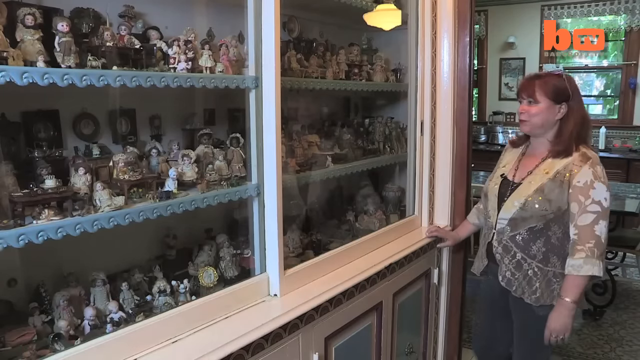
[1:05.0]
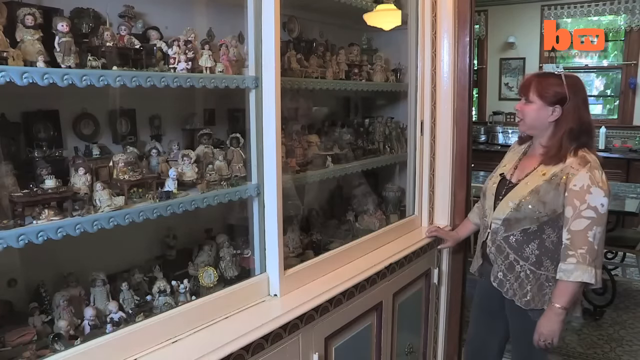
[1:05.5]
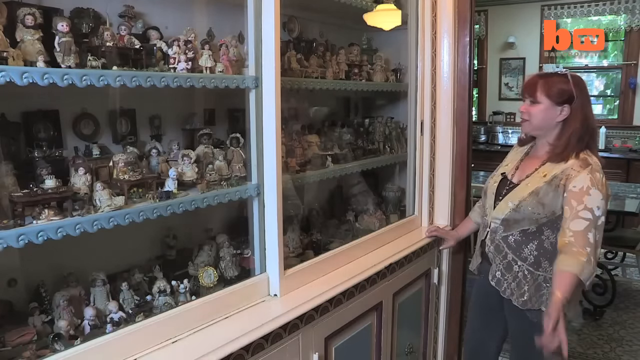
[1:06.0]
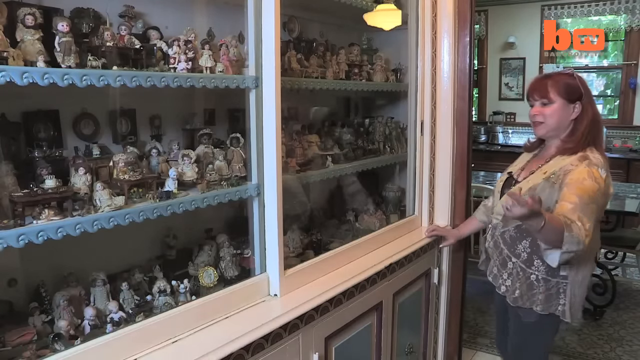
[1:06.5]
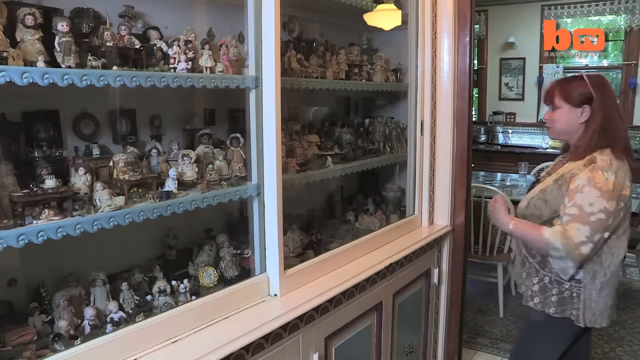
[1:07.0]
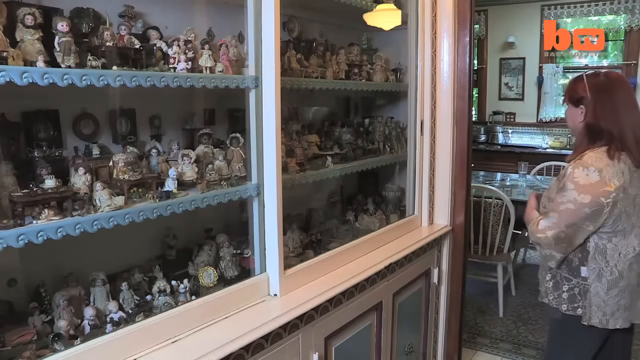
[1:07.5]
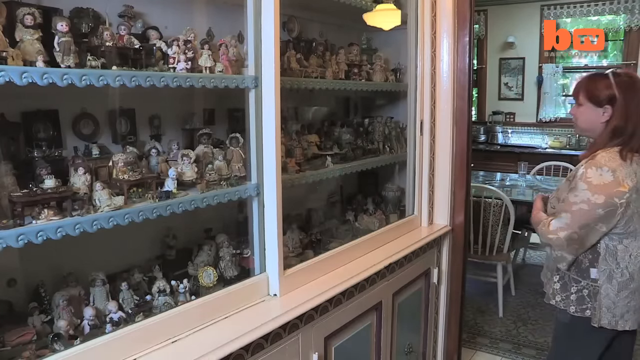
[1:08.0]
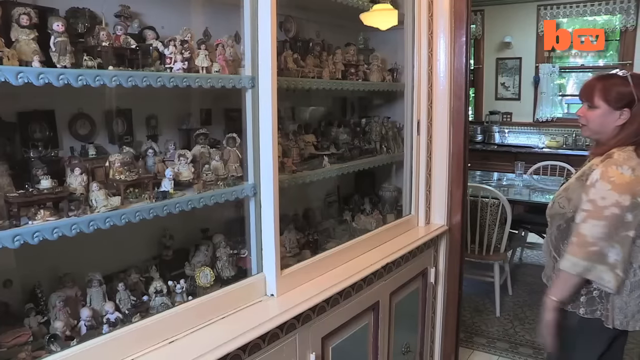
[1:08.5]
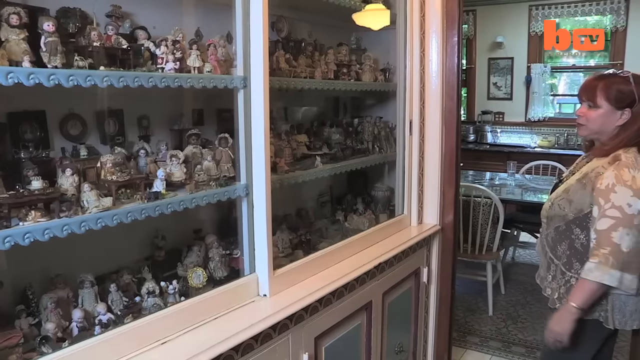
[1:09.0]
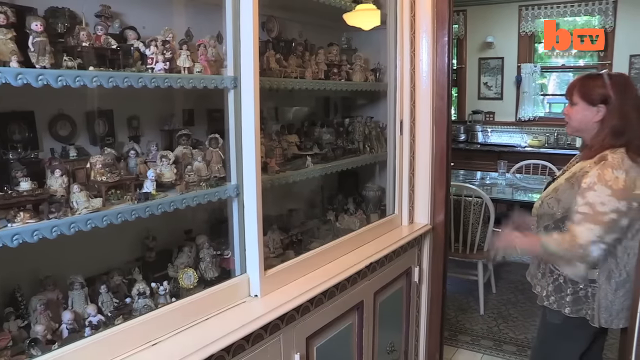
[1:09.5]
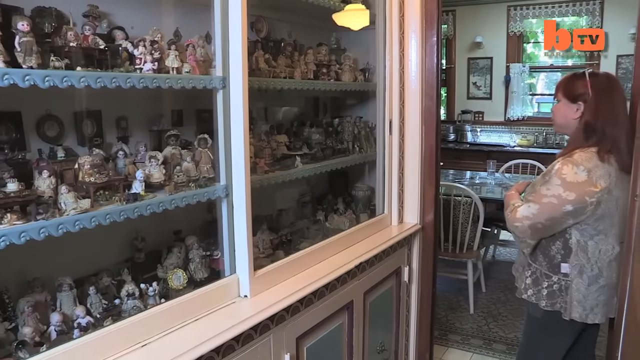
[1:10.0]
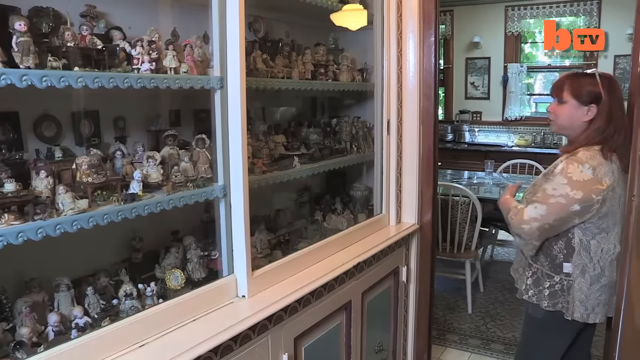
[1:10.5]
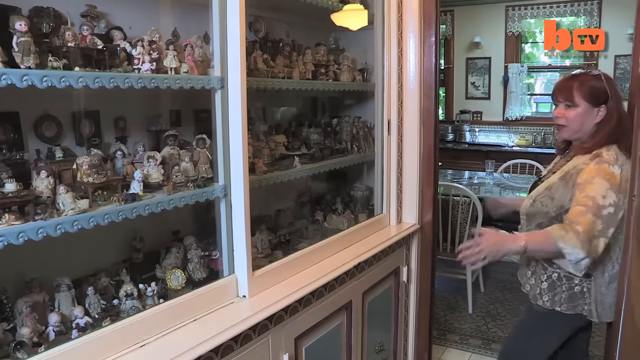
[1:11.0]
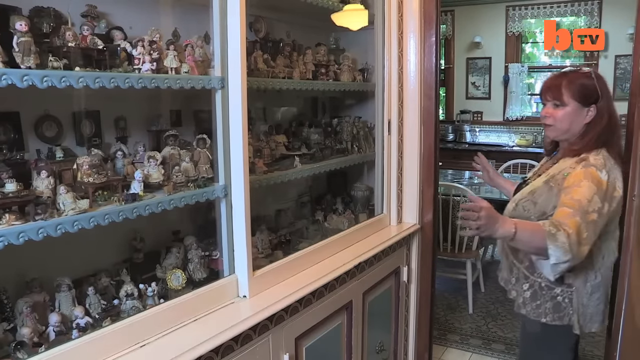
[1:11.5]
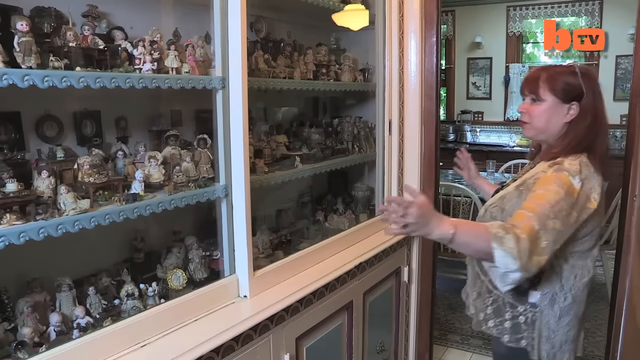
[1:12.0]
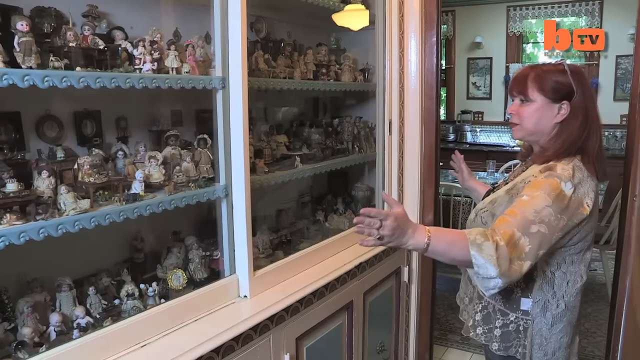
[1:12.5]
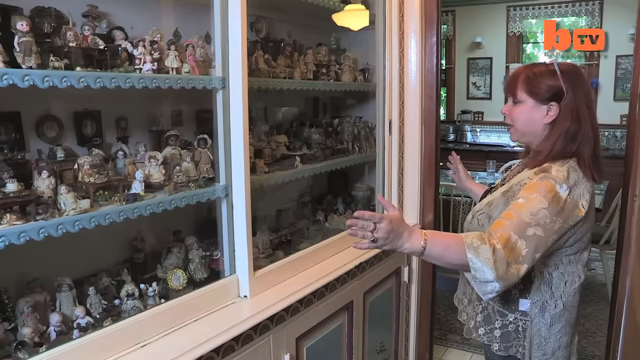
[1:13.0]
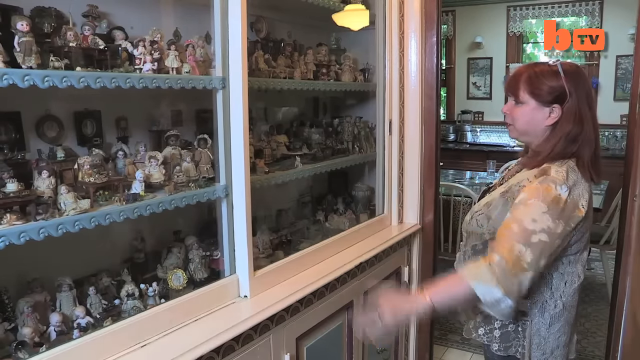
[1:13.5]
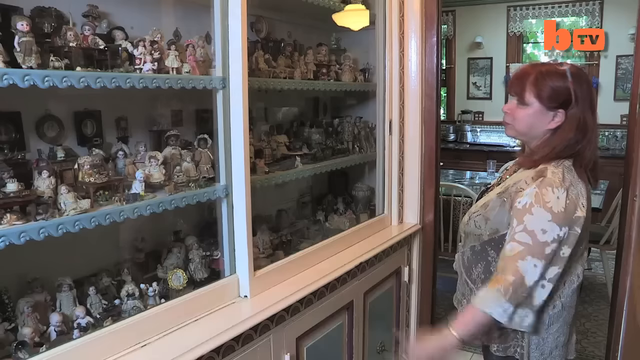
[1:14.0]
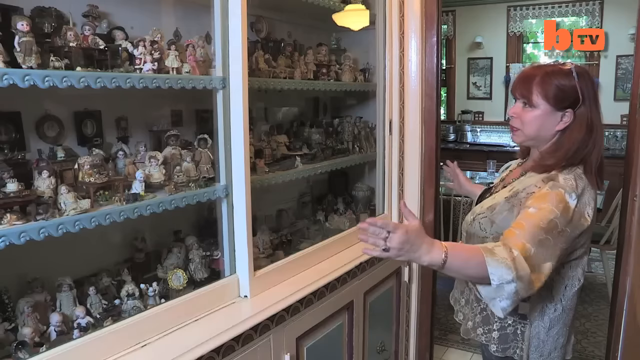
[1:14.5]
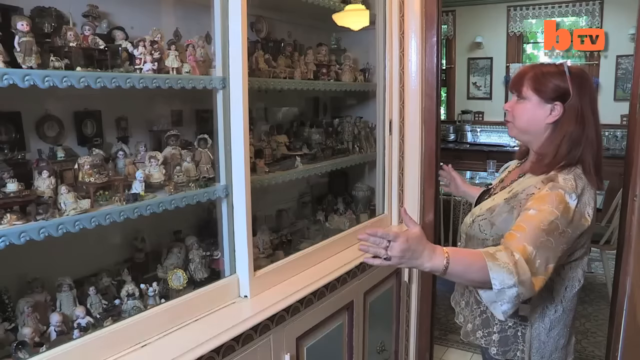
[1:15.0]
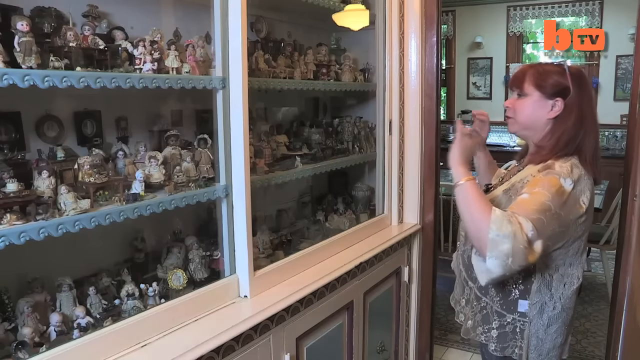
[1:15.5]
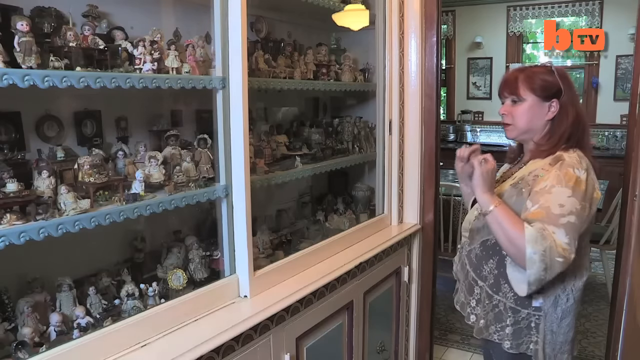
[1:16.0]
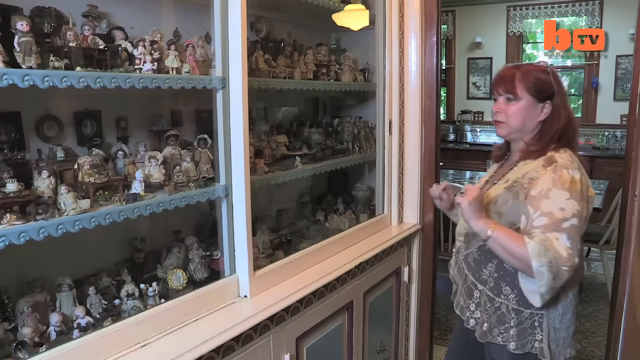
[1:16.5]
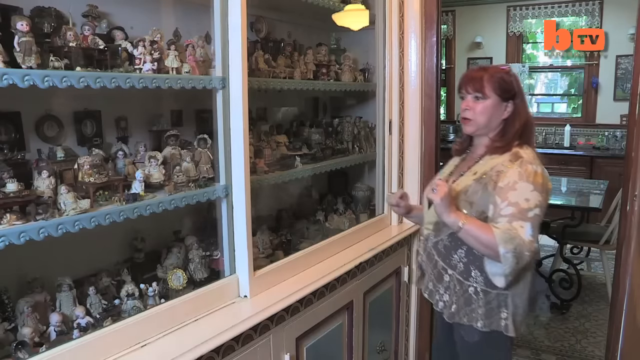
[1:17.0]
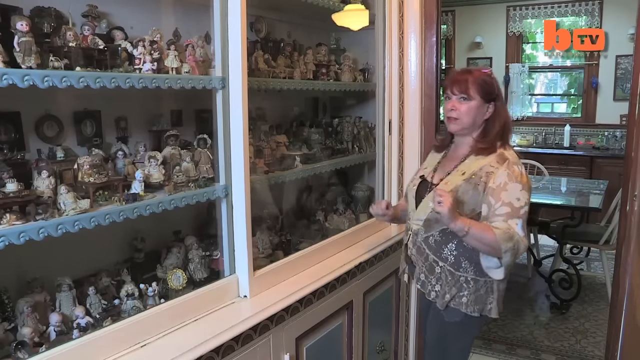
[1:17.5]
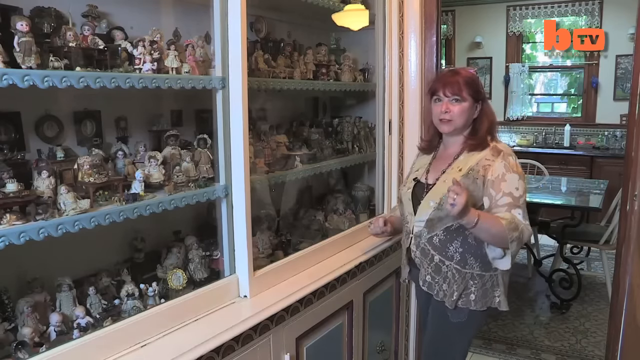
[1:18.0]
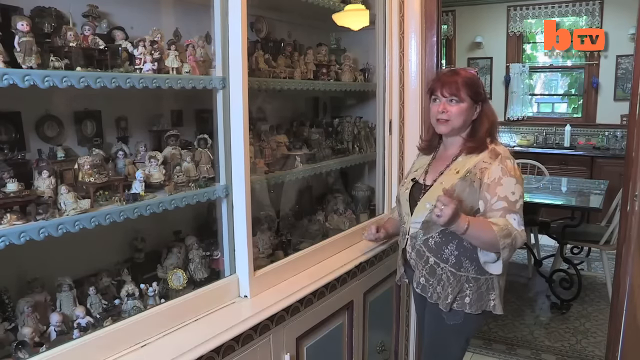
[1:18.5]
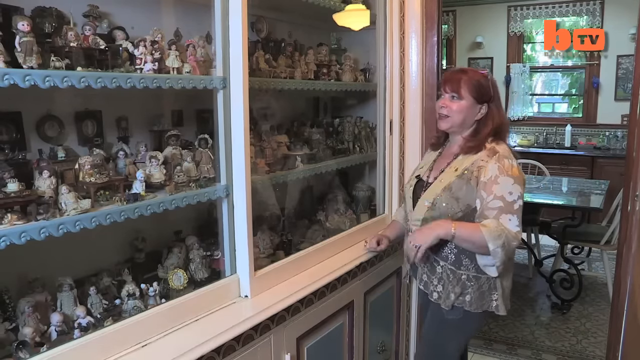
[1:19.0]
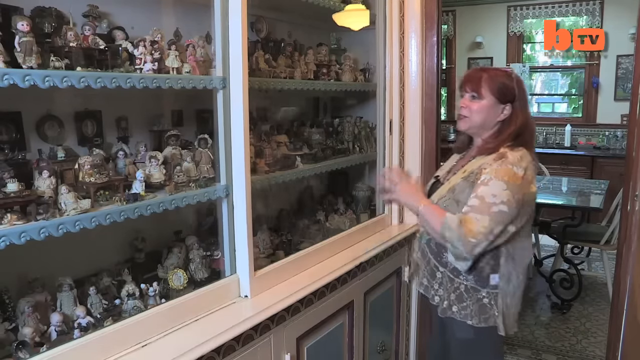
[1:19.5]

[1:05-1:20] The woman stands, seen from a side view, talking about the dolls in a cabinet display with glass doors. The cabinet has three shelves on each side, holding very small dolls, apparently about 10 to 15 dolls per shelf. The woman is just in front of a doorway with dark brown rectangular molding around it. Behind her is a table with two chairs, in what looks to be the kitchen of her house. There is also a window in the background with dark brown wooden framing, and the wall looks light gray.